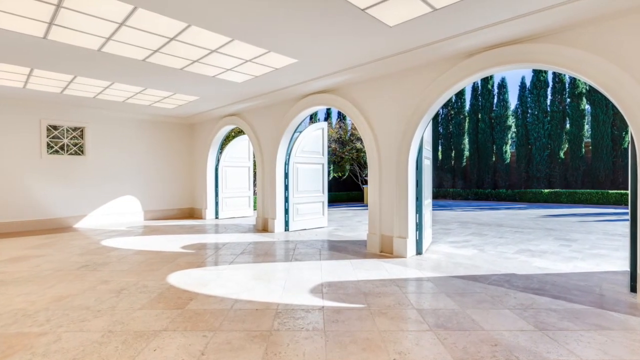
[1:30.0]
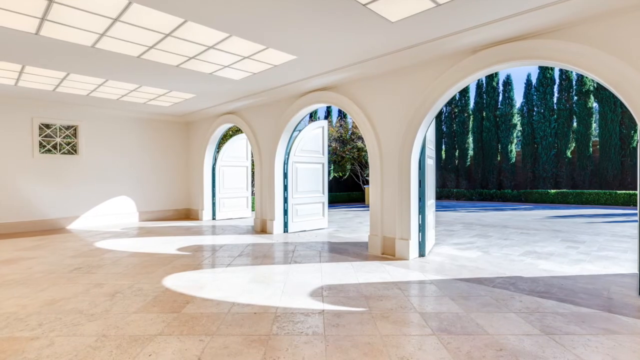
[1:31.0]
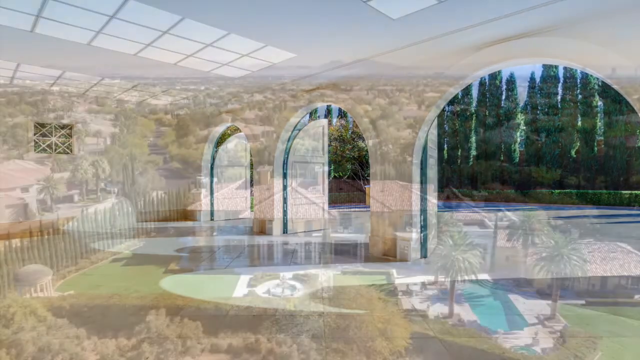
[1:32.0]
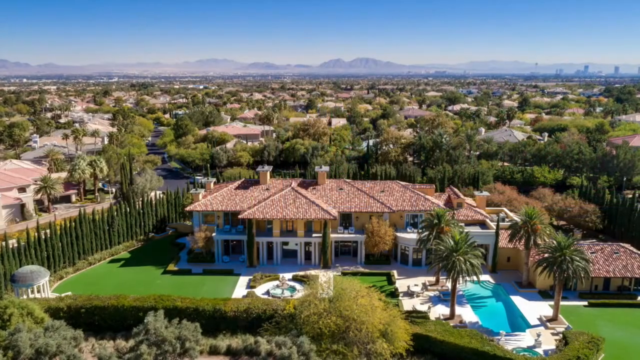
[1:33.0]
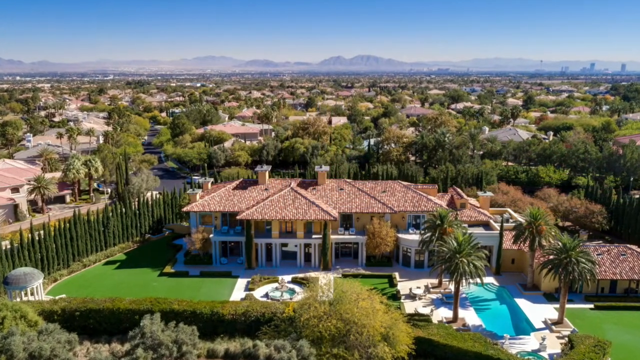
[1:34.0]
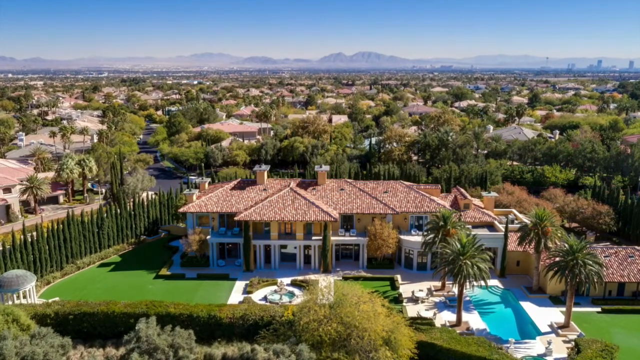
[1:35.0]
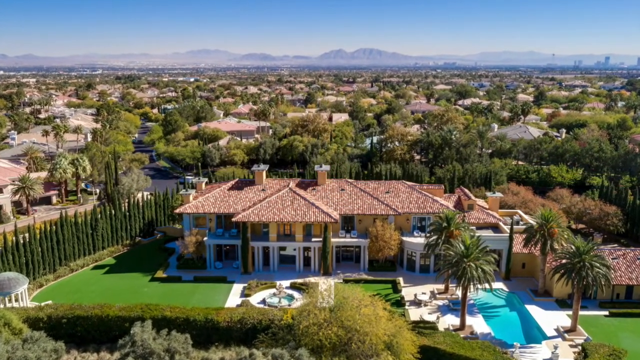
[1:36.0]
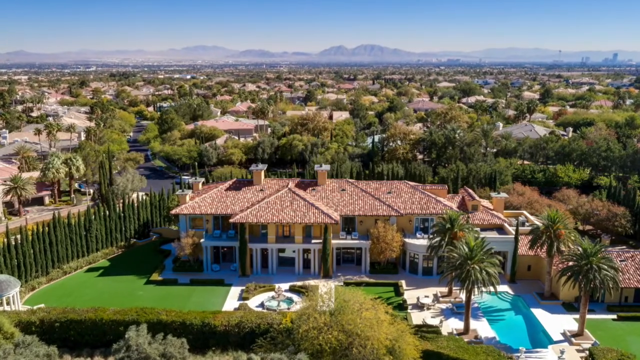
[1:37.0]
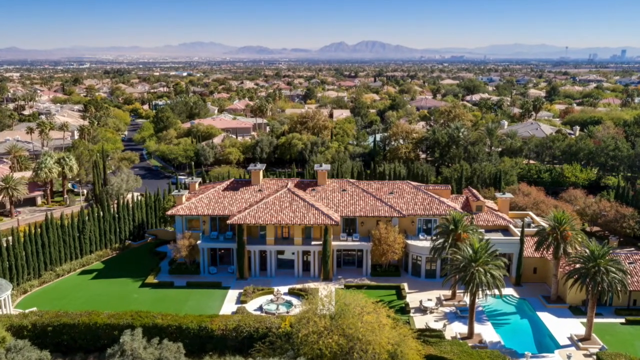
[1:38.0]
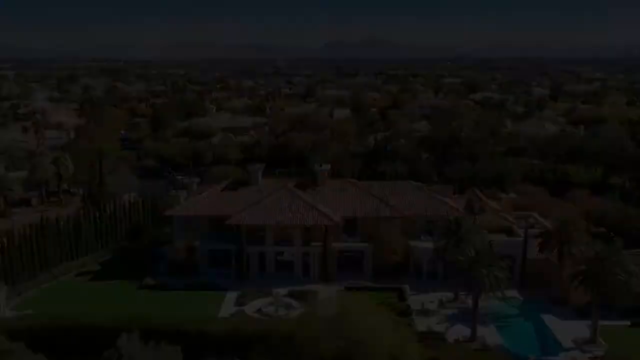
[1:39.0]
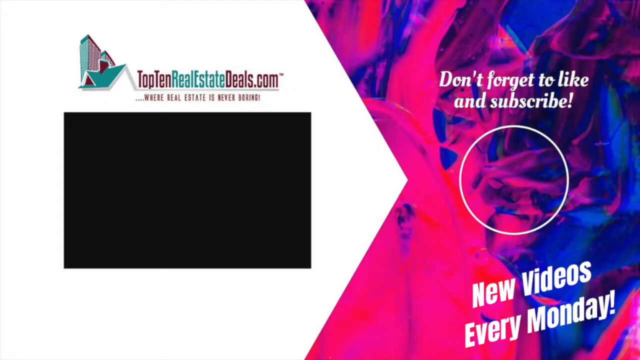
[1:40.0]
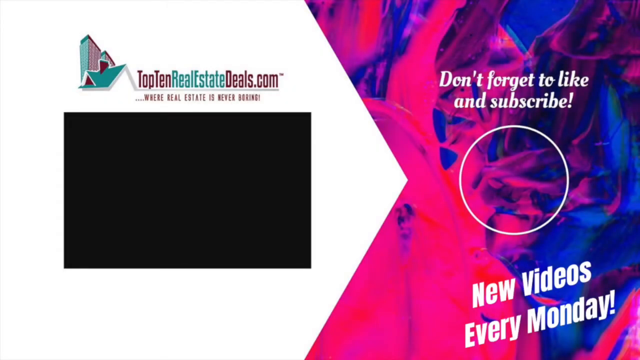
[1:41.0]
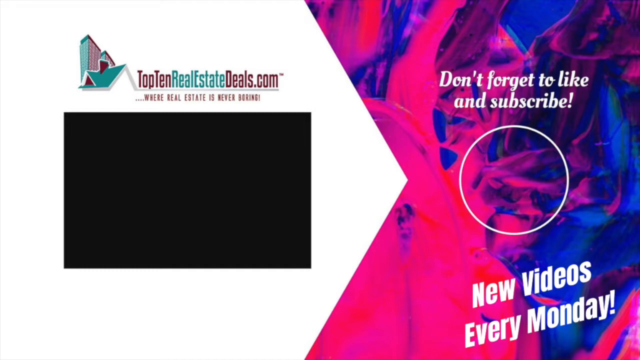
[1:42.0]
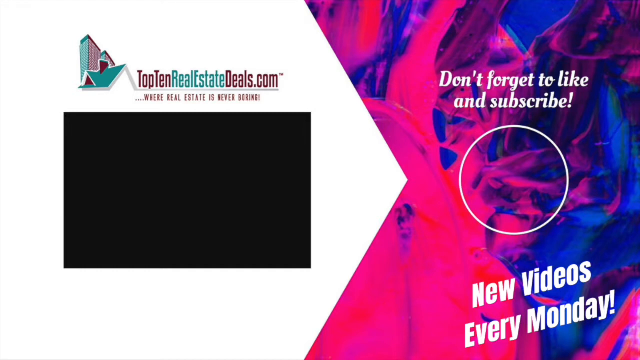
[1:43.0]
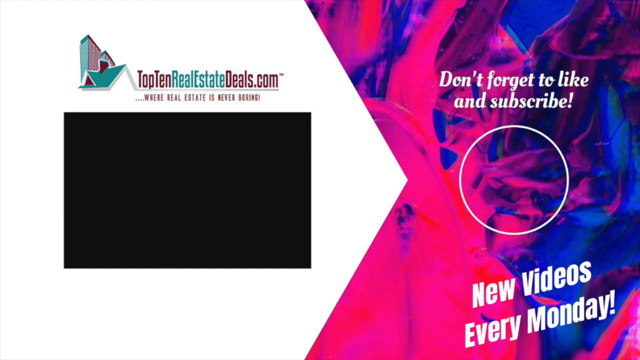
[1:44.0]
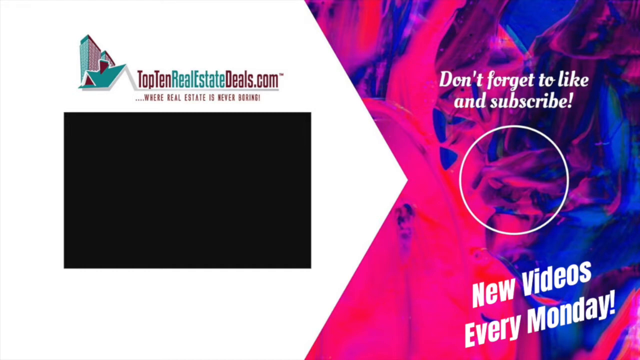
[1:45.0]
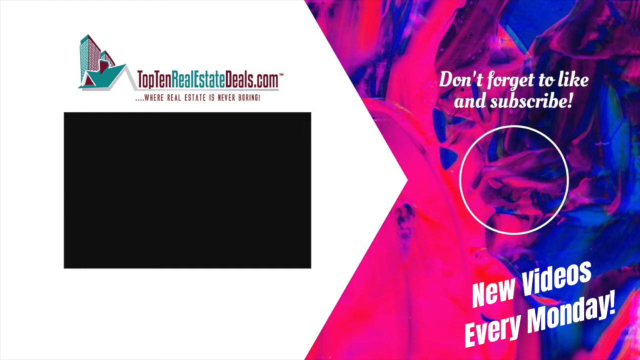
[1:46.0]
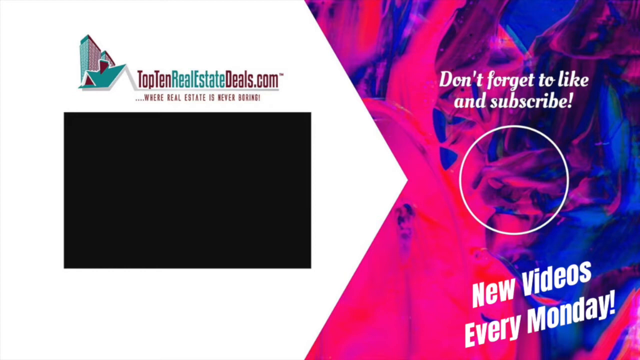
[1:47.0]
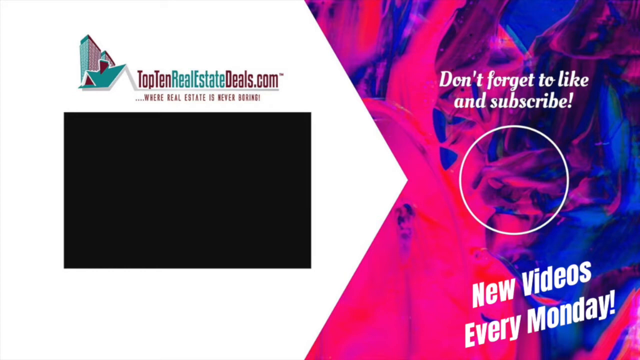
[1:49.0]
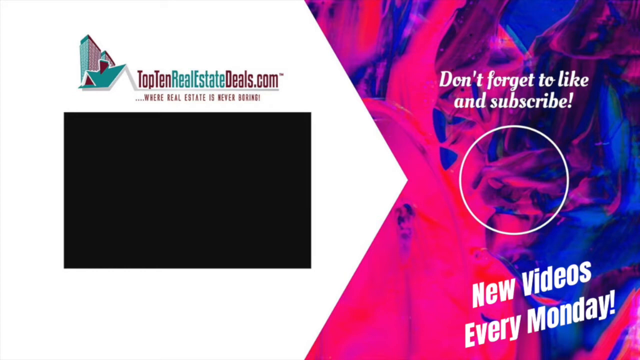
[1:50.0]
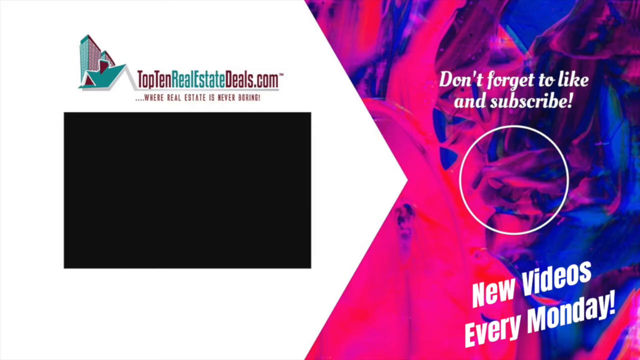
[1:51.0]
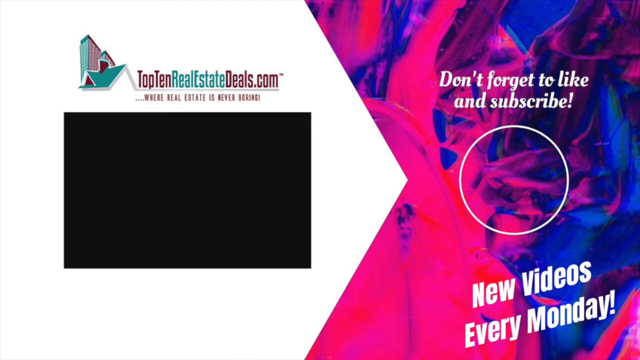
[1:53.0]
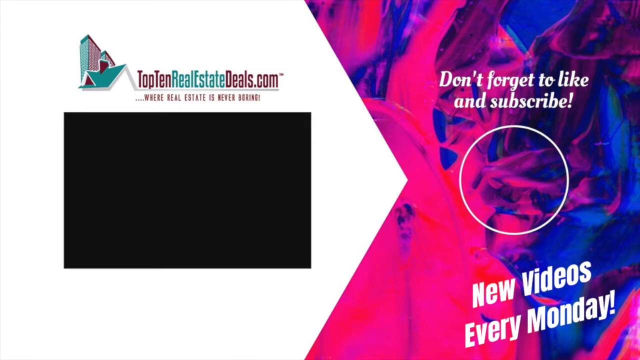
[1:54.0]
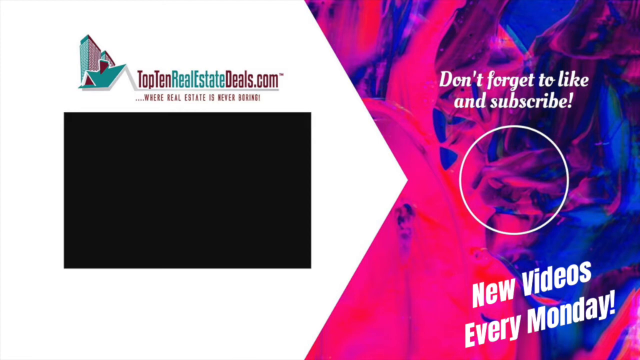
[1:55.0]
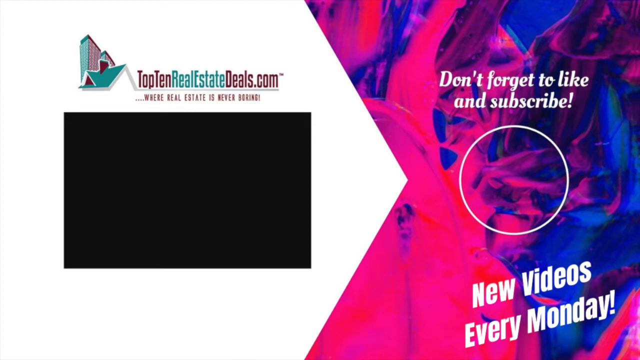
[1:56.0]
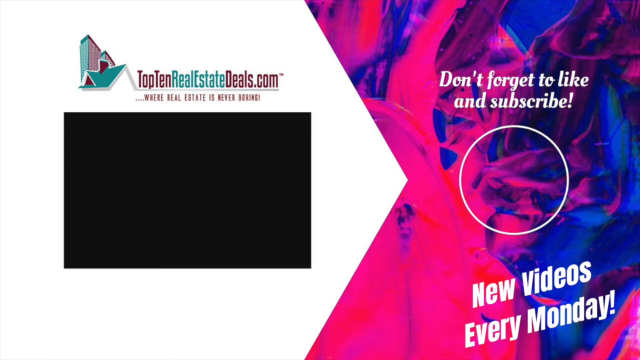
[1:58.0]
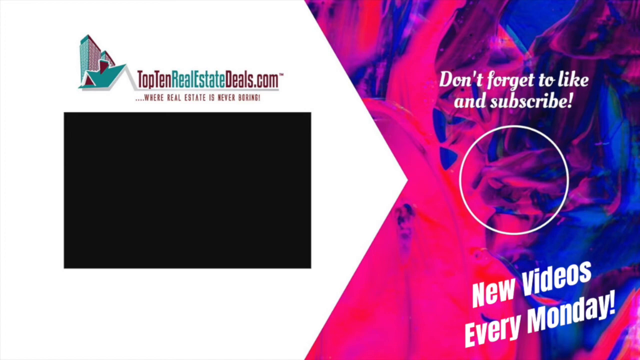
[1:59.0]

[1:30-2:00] From the garage and parking area, the video quickly transitions to an aerial, drone-like view of the roof and garden area, then zooms in on the pool and fountain of the home. At the end a screen appears reading "TopTenRealEstateDeals.com, Where real estate is never boring." On the right, over an active red, blue and white background, it reads "Don't forget to like and subscribe. New videos every Monday." The screen has a two-tone split background, white on the left, with an angular central dividing arrow pointing to the red-blue swirls on the right. A rooftop image logo is in the upper left next to "TopTenRealEstateDeals.com". A large solid black square with nothing in it is underneath the logo on the left side, and a white circle border with the background showing through its open center is on the right.